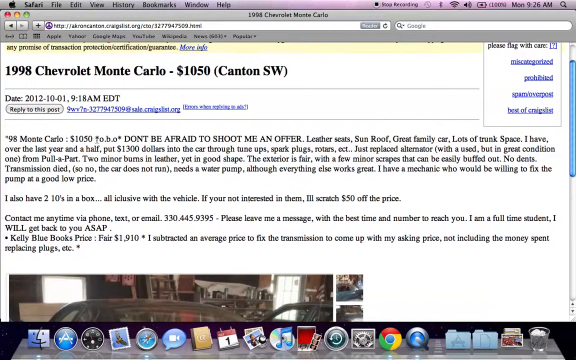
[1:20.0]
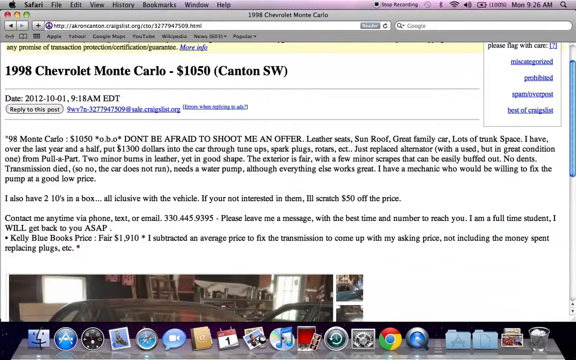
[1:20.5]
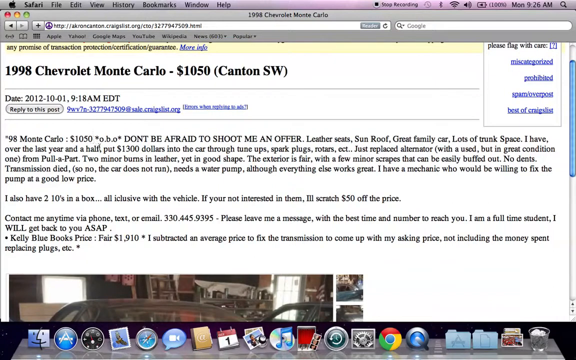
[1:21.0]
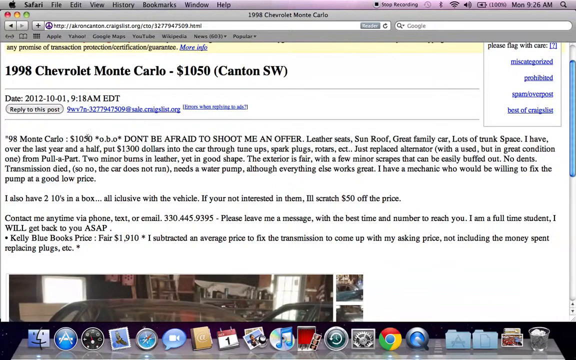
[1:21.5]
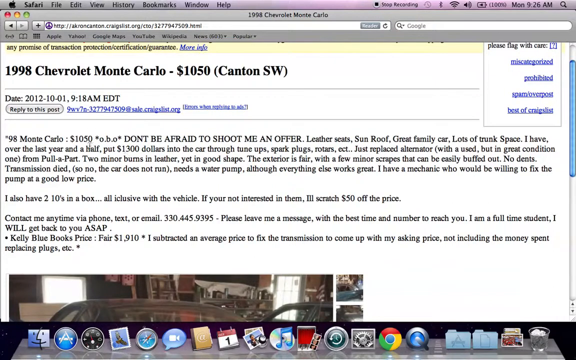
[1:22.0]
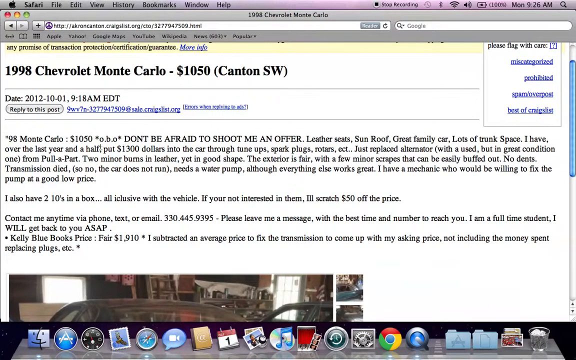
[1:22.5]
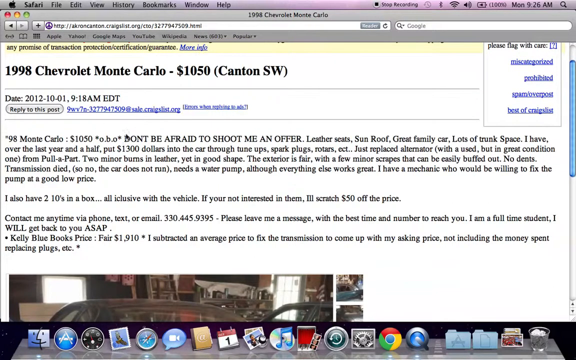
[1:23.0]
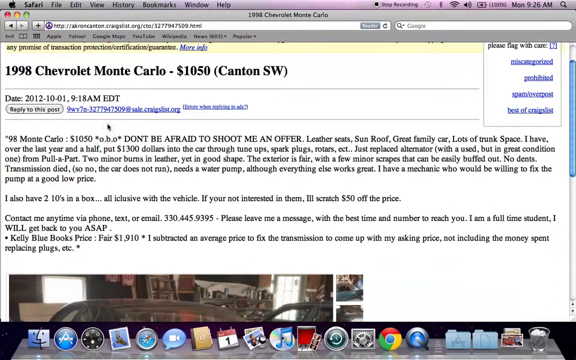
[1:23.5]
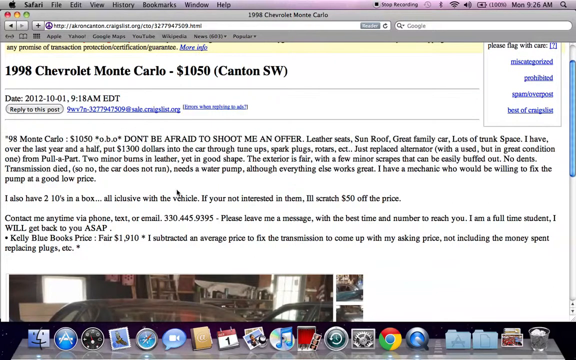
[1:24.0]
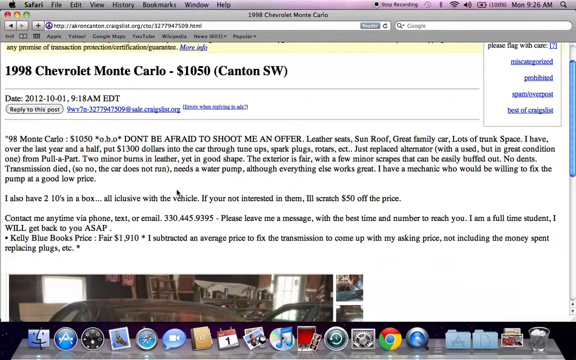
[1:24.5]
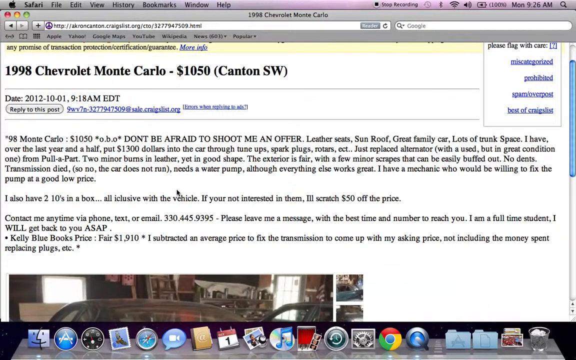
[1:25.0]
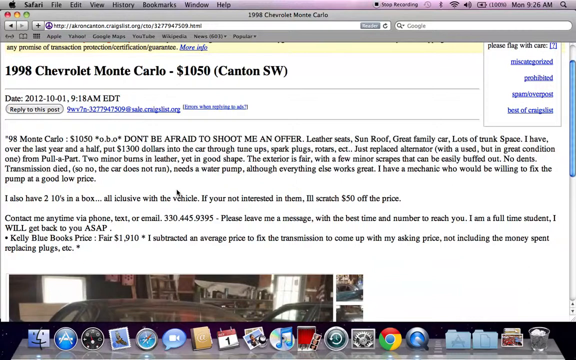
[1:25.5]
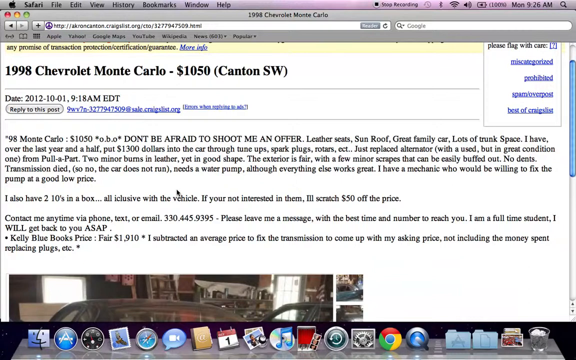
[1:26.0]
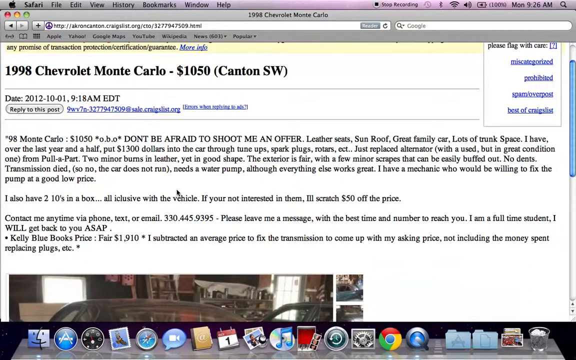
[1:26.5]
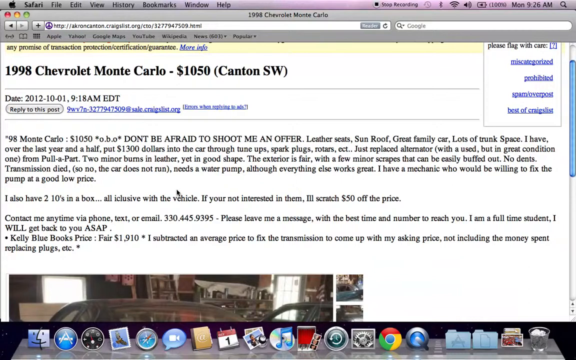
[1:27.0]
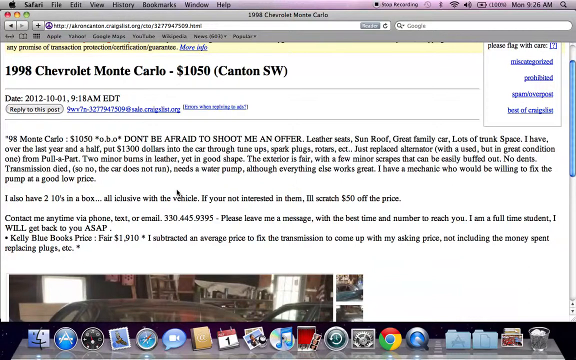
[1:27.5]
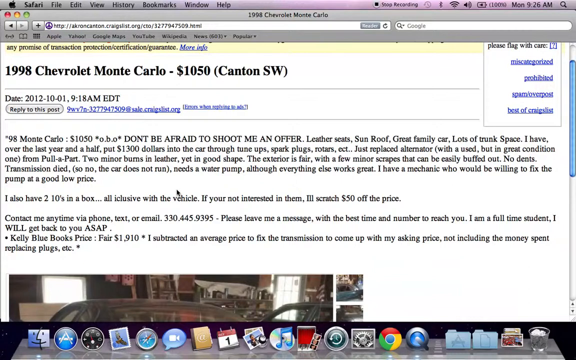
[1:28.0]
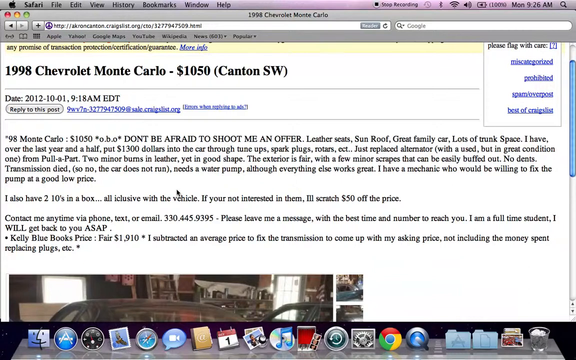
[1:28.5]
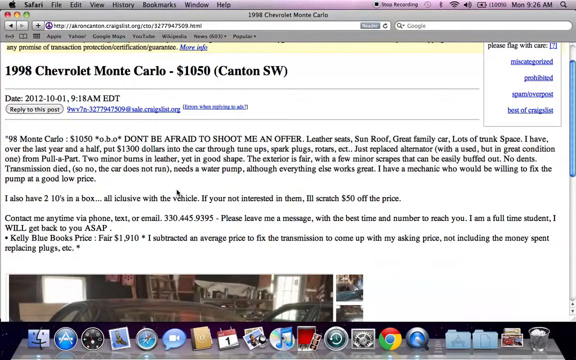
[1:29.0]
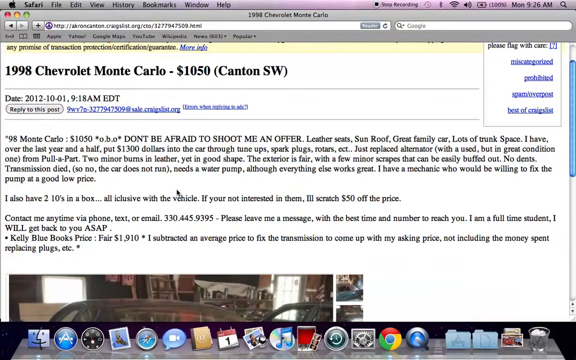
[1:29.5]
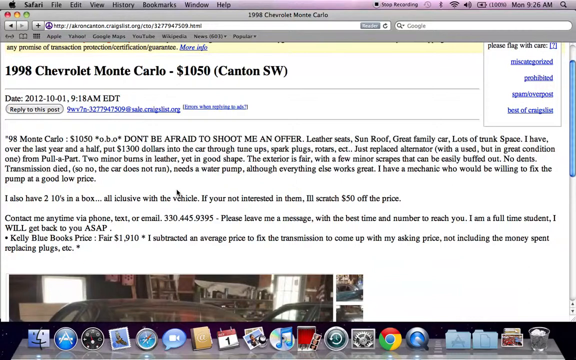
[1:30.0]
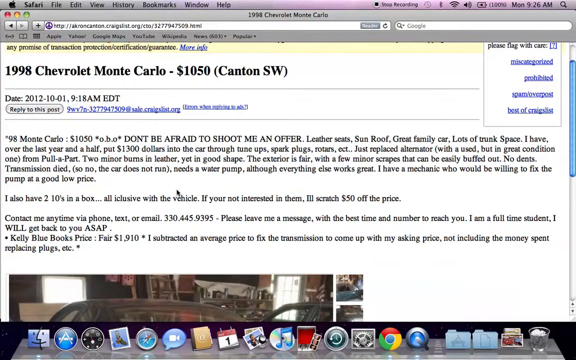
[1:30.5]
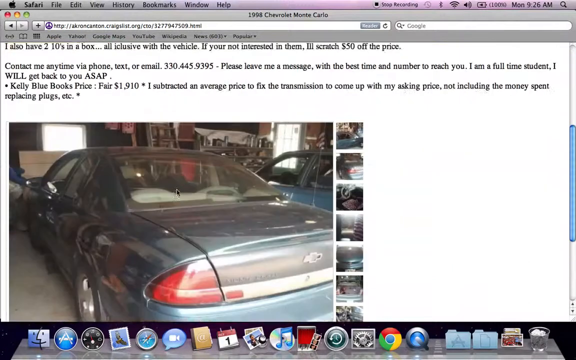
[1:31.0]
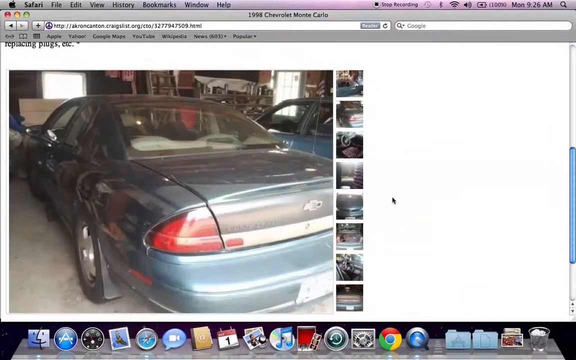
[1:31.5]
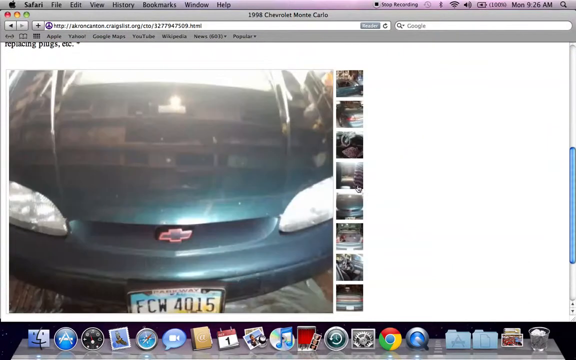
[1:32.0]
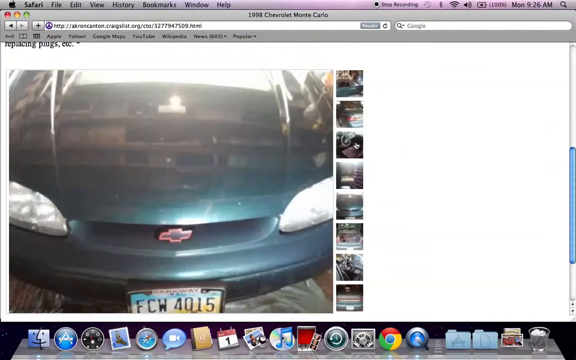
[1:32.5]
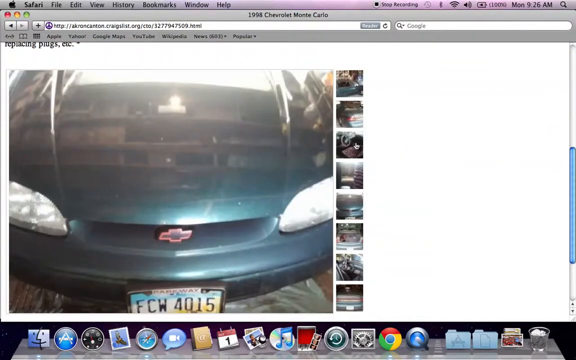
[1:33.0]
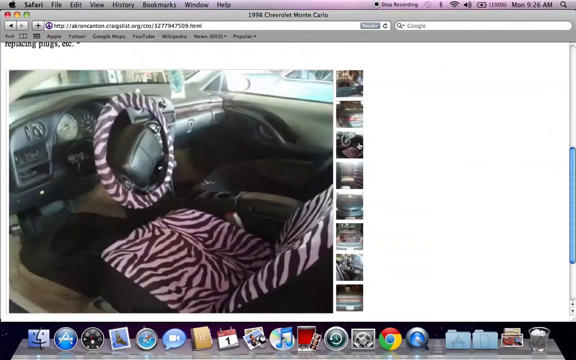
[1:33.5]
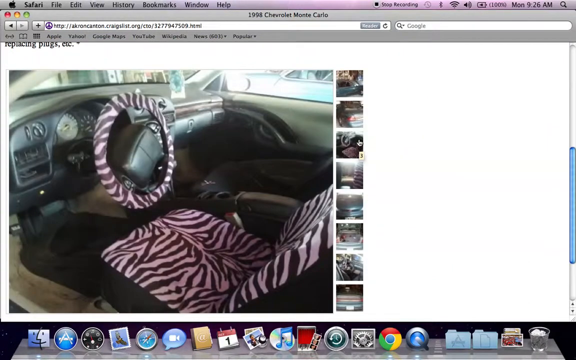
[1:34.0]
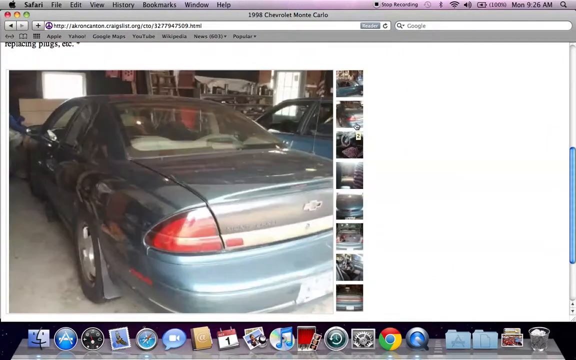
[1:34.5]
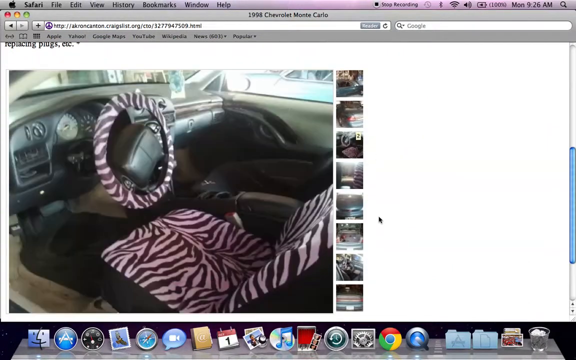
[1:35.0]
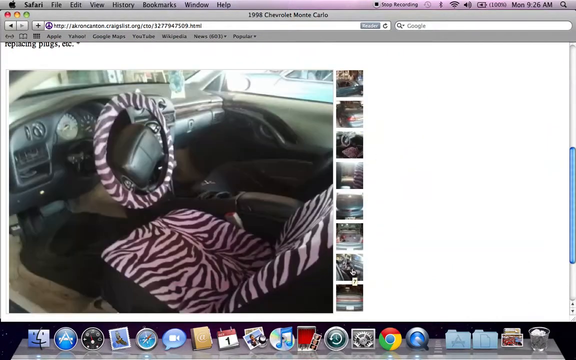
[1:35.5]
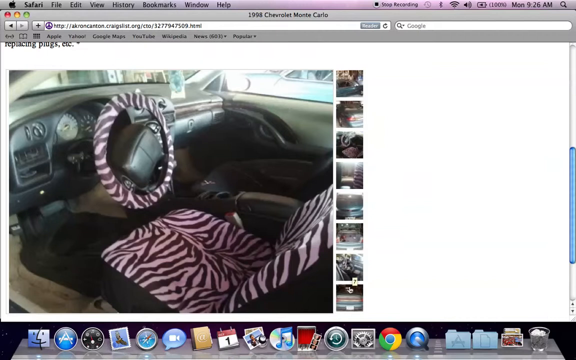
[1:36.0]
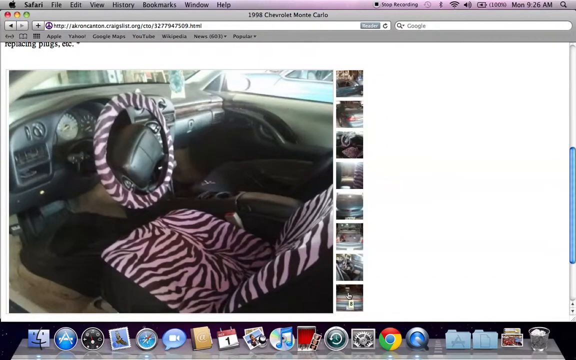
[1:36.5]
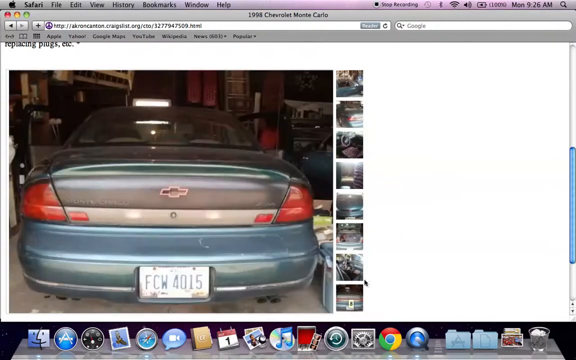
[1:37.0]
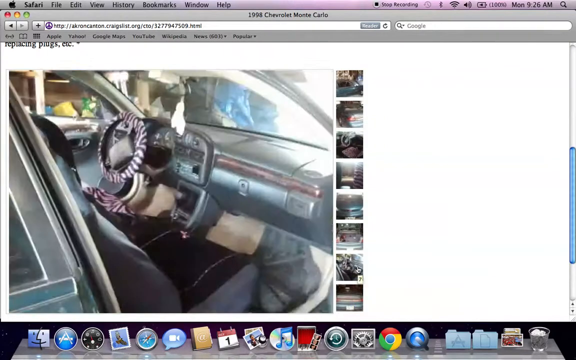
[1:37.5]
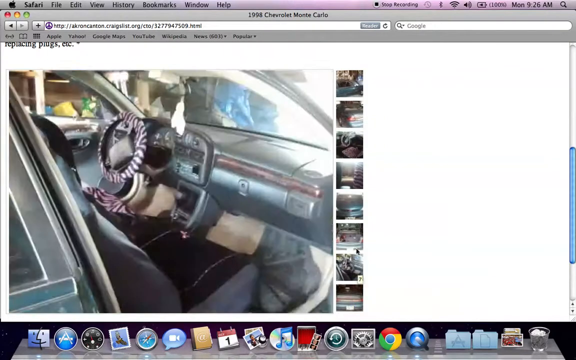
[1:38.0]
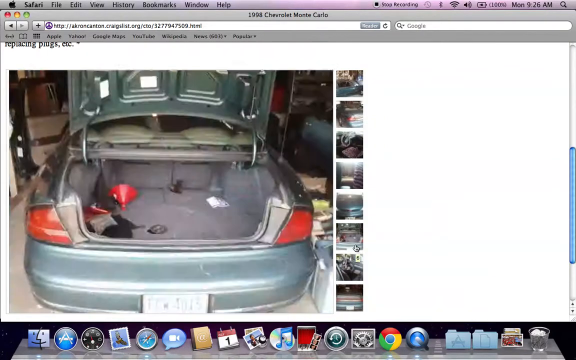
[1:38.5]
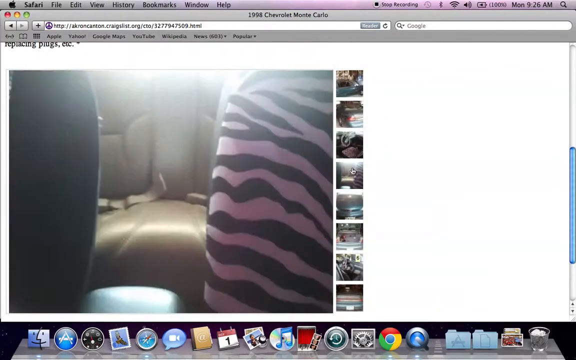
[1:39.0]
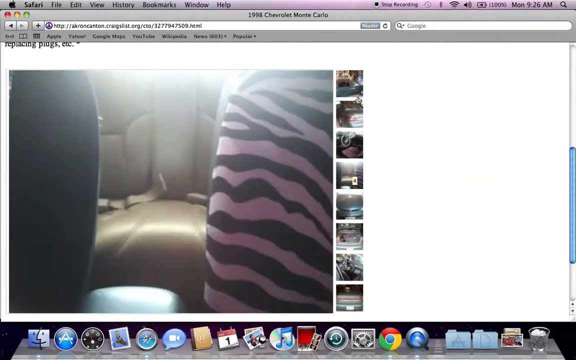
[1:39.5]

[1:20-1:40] A Craigslist listing is open, with "1998 Chevrolet Monte Carlo - $1050" and "(Canton SW)" at the top. The mouse cursor moves around to emphasize the price in the description, "98 Monte Carlo $1050 *o.b.o*", circling it. The page is then scrolled to the pictures of the car. The first picture shows it from behind; it looks decent and shiny, maybe a dark teal or gray color. Next is a picture from above showing the hood and the license plate, then the driver's seat, which has a pink and black zebra seat cover, and the steering wheel, which also has a pink and black zebra cover. The pictures are clicked through quickly to the trunk: a picture of the open trunk with a red funnel in it, then a quick picture of the back seat taken from between the two front seats. A side view of the car shows the passenger side, which looks like it has a lot of scratches.